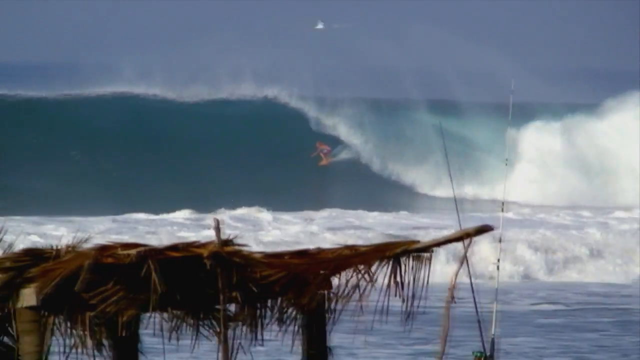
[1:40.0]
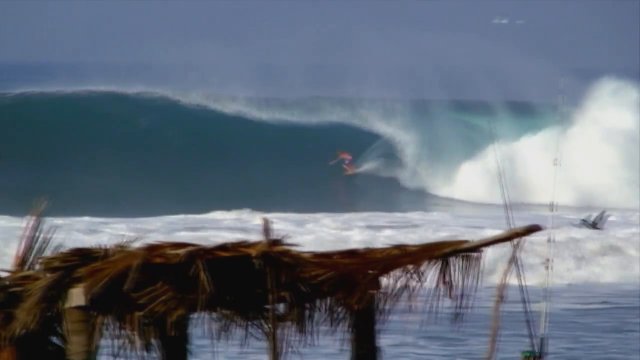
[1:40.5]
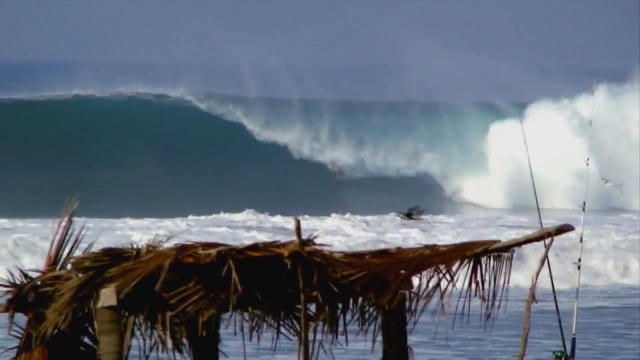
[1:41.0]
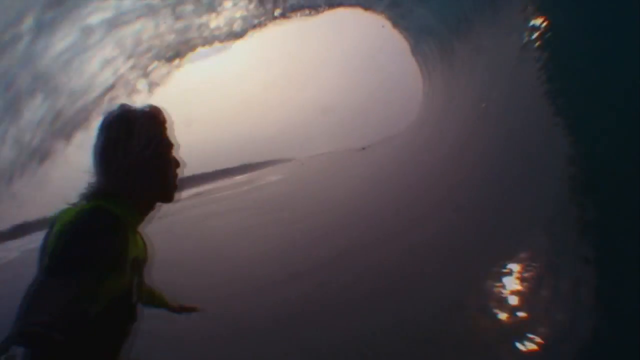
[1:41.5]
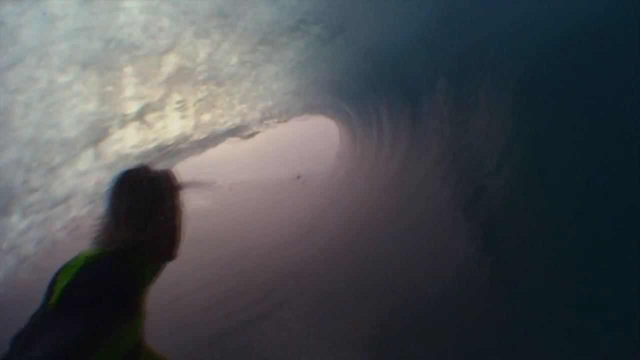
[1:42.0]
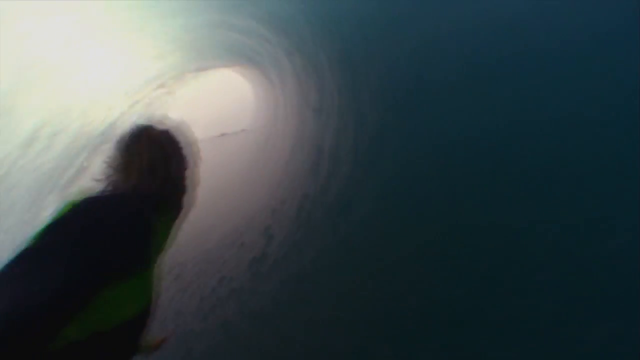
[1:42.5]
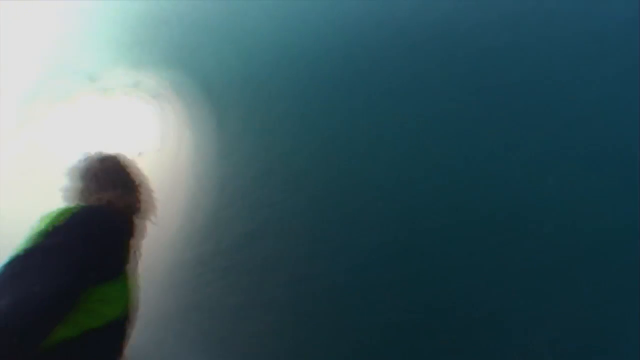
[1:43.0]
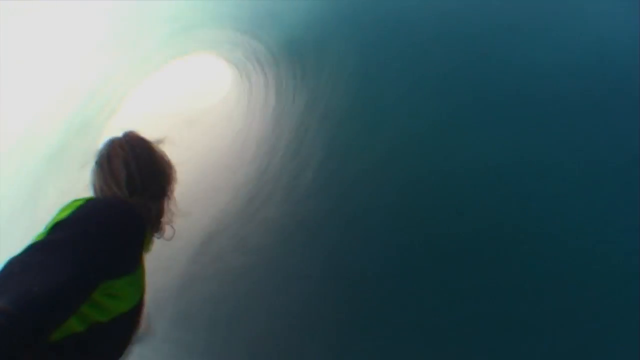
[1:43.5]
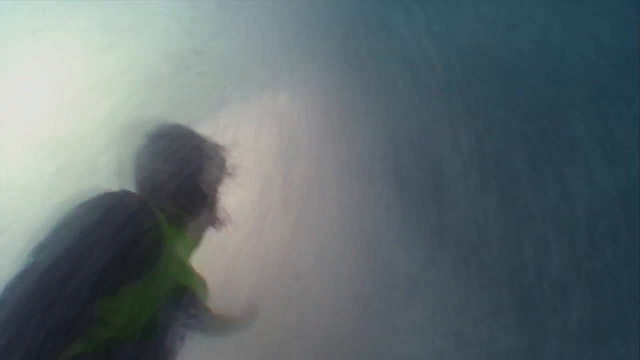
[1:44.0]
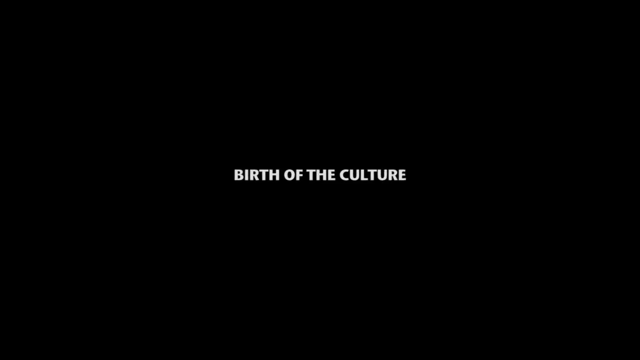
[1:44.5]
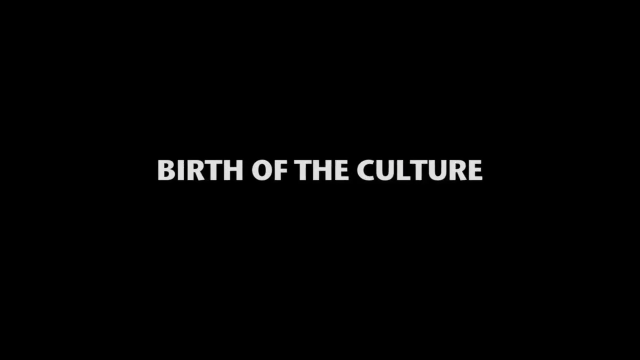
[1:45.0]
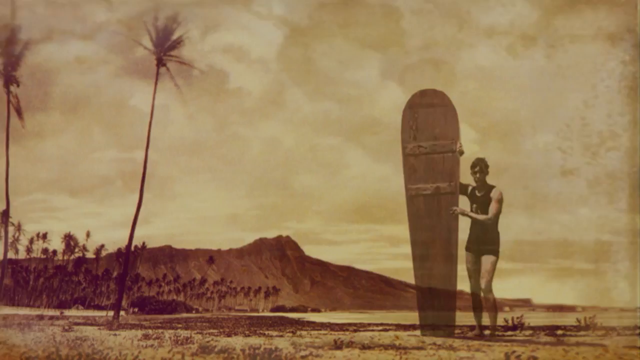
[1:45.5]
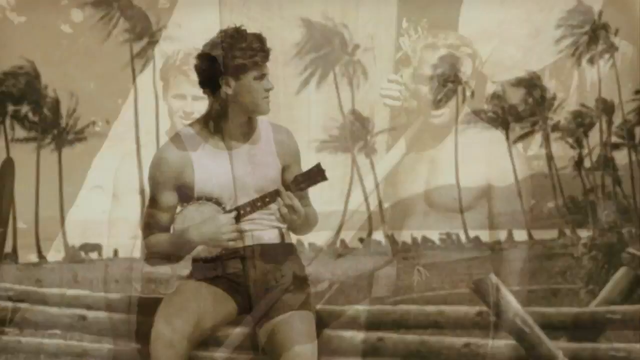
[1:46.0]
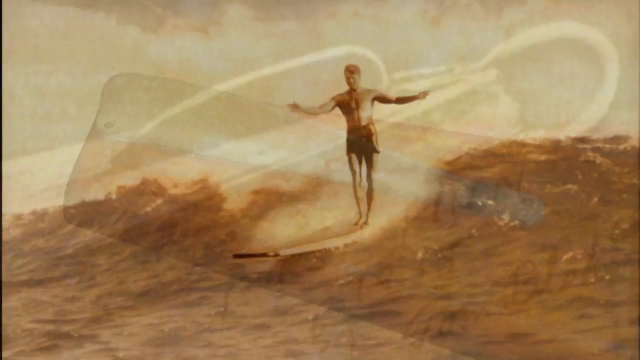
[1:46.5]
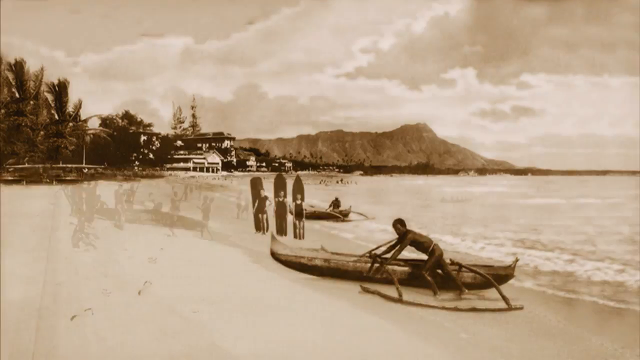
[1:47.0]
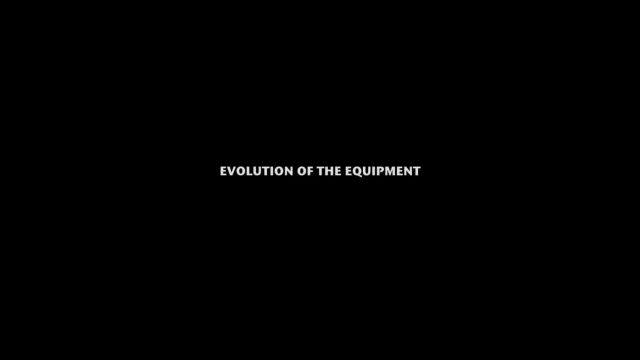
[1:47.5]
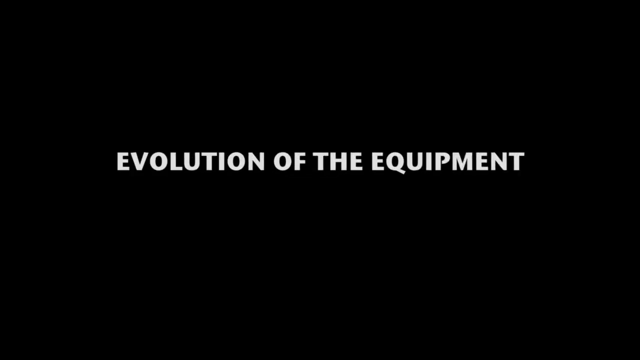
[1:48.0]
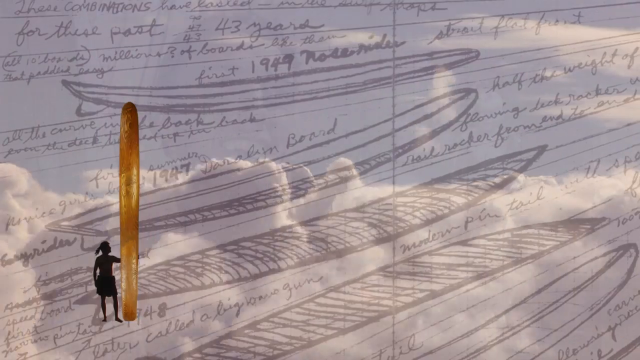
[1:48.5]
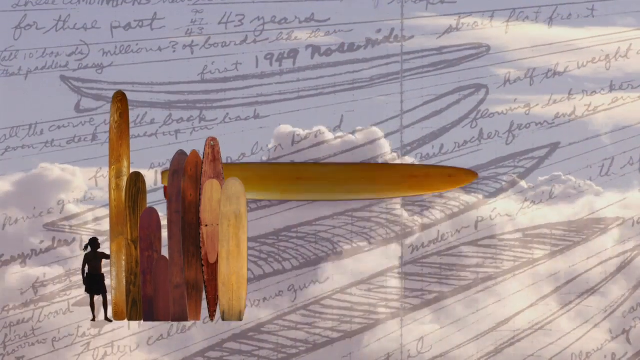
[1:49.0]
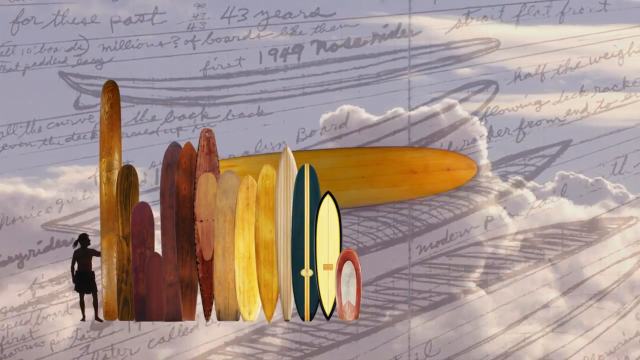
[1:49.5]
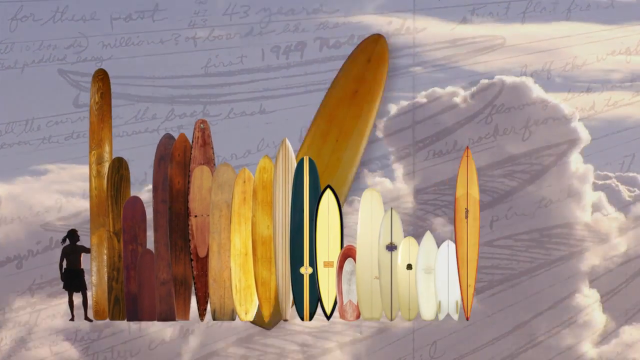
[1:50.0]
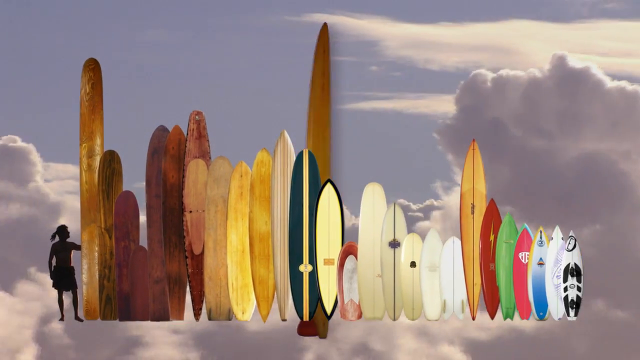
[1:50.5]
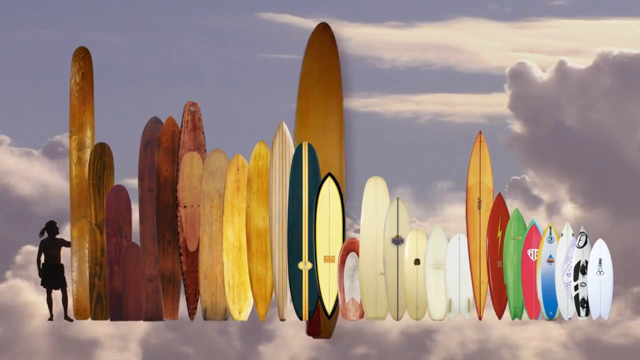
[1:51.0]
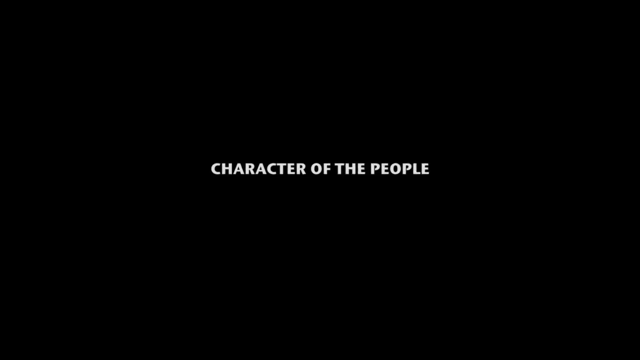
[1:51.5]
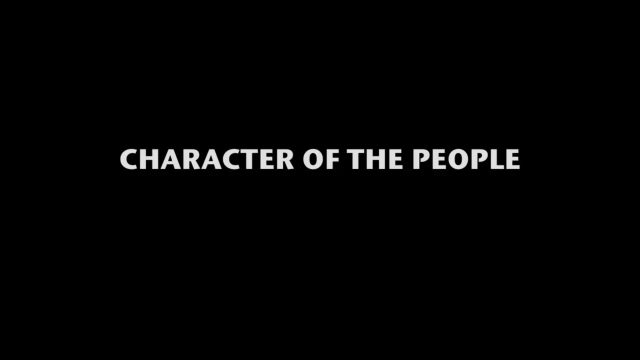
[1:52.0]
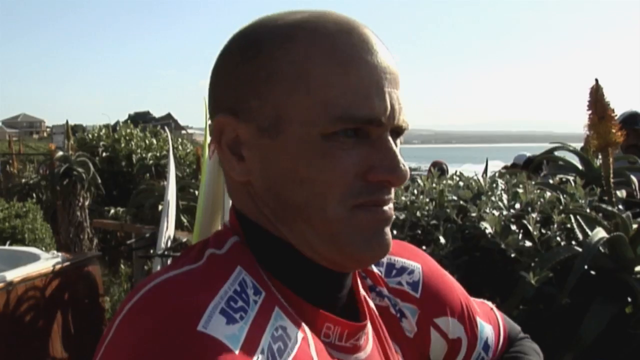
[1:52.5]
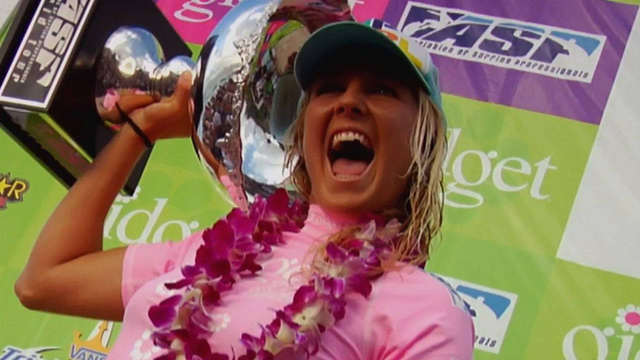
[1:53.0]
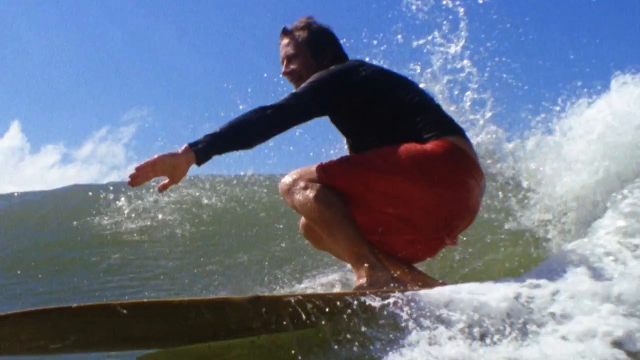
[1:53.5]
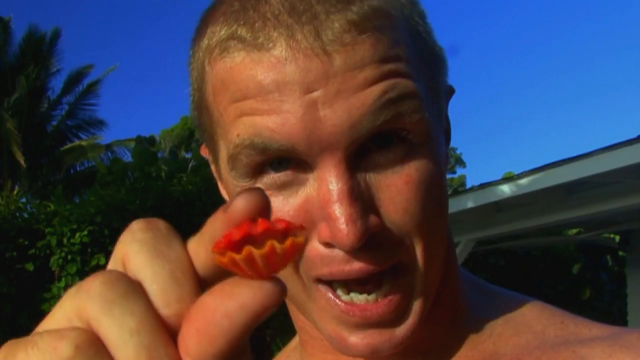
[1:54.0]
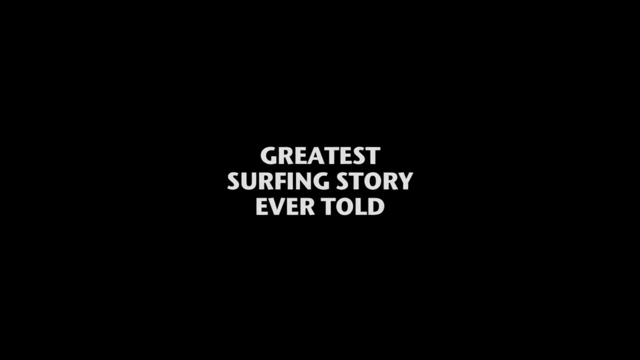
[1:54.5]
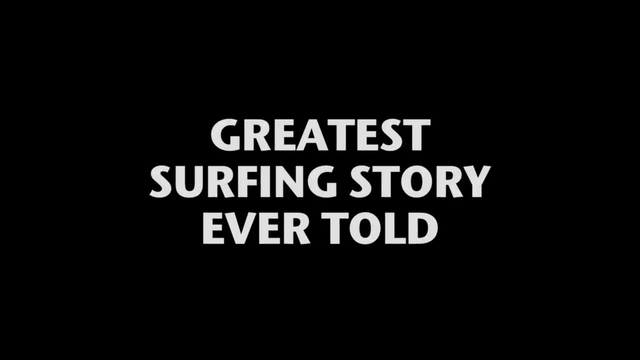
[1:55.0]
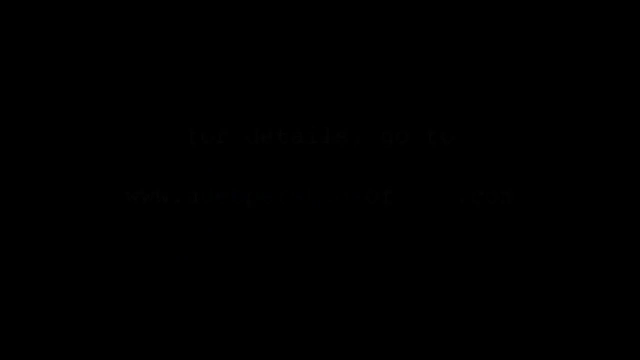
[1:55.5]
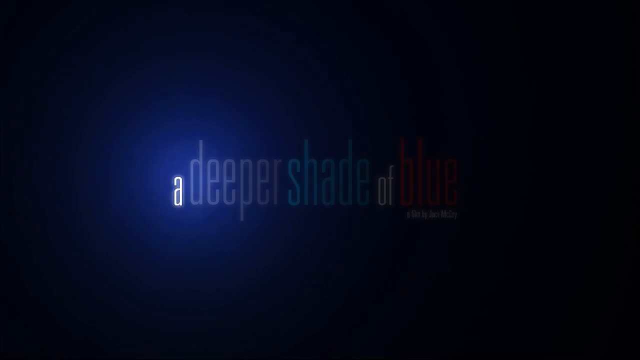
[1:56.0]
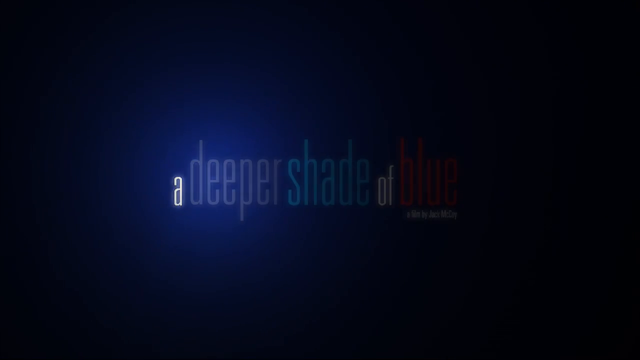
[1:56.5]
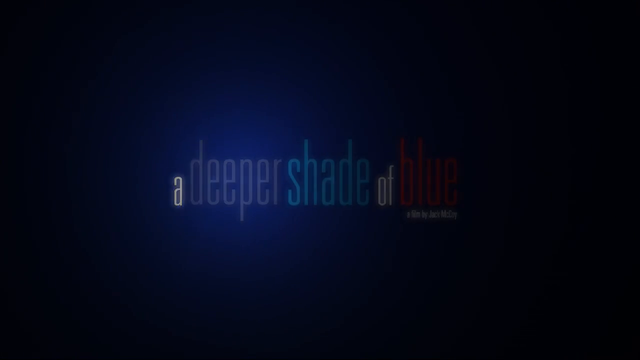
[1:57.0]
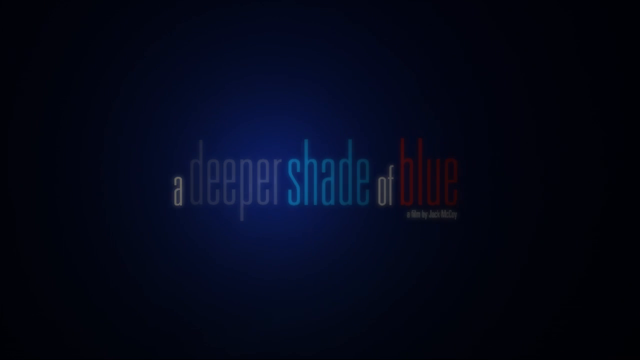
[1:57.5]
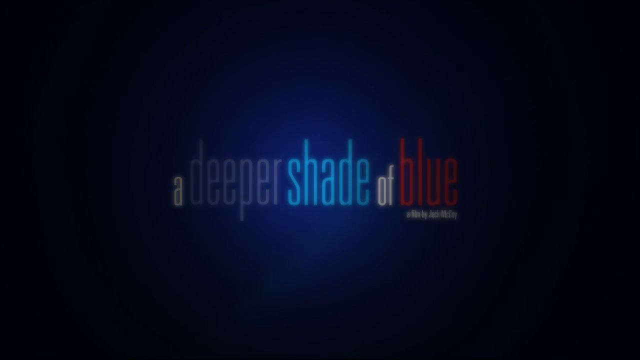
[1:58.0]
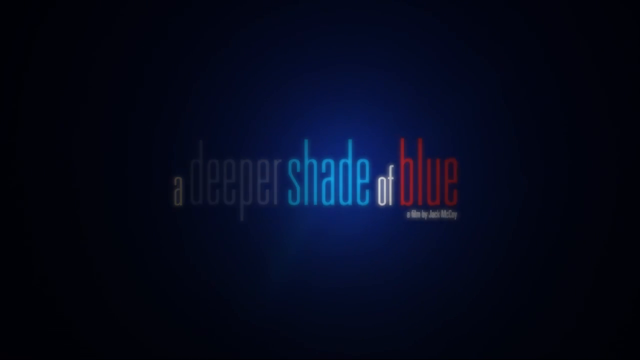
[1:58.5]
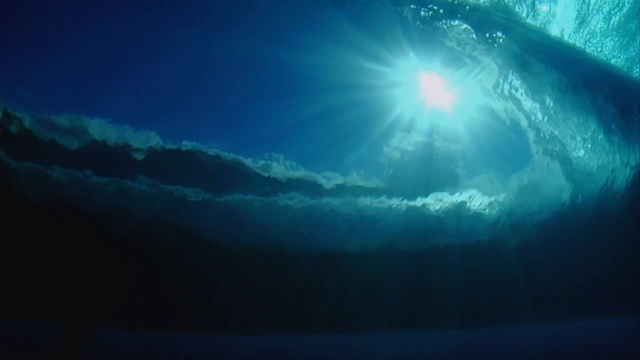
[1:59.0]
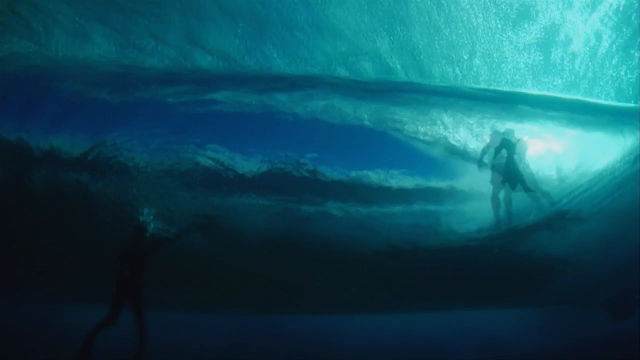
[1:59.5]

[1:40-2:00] A bird flies from the right of the screen to the left in the foreground while a person surfs in the background. A surfer in a yellow top goes through the middle of a wave, through the tunnel. White text on a black background appears, saying "birth of the culture", followed by many fast-moving images of surfing history flashing up on the screen, many per second. More text says "evolution of the equipment", and a very fast-moving sequence shows the evolution of the surfboard through the ages, from wood through different shapes and sizes to the sort of plastic surfboards used nowadays. Text then says "the character of the people" and a collection of different personalities and people is shown. The film is apparently presented as the greatest surfing story ever told, called A Deeper Shade of Blue, with a strictly limited release.